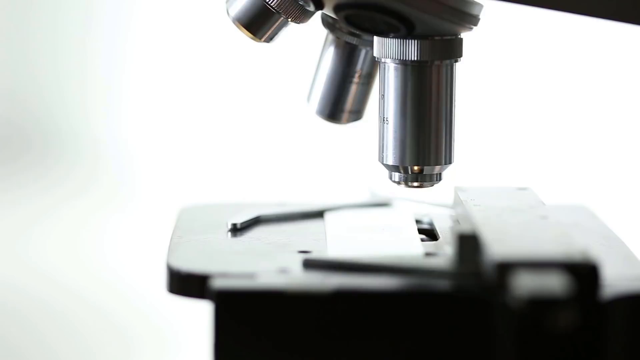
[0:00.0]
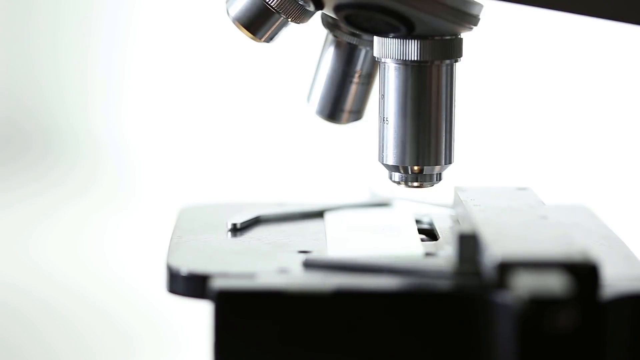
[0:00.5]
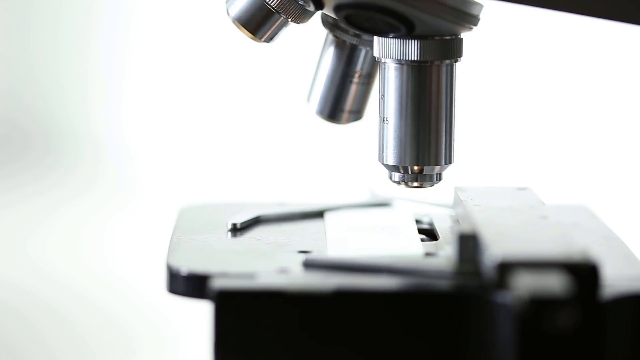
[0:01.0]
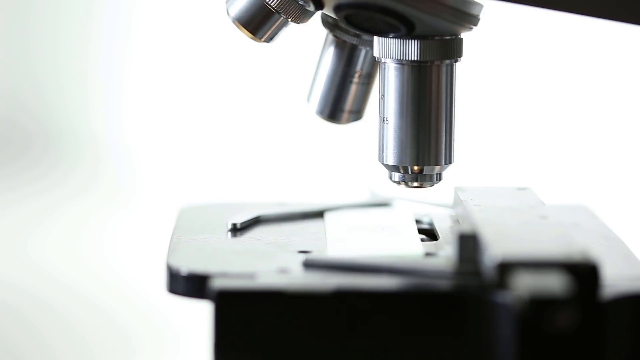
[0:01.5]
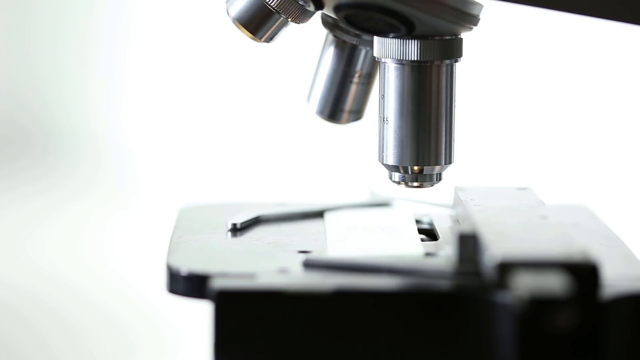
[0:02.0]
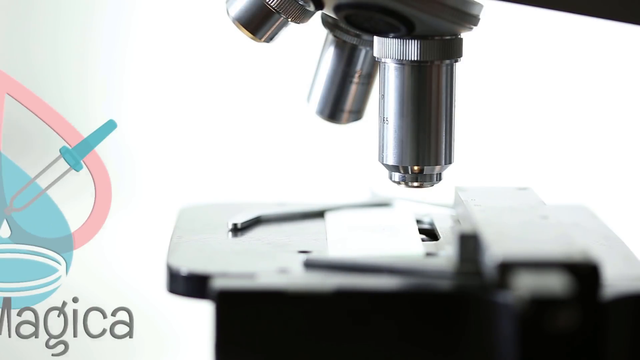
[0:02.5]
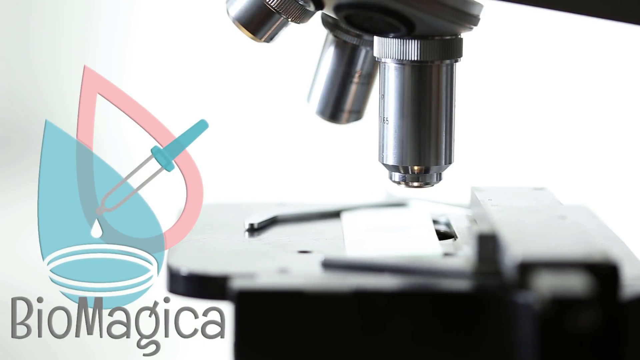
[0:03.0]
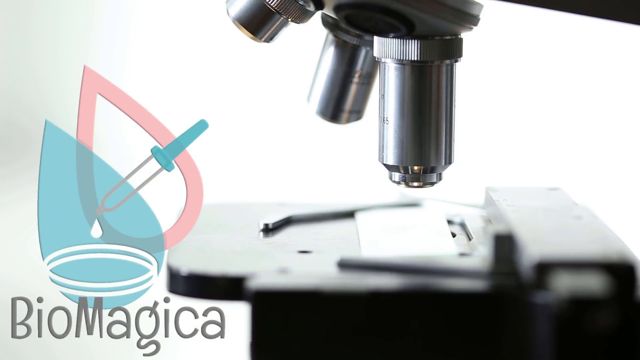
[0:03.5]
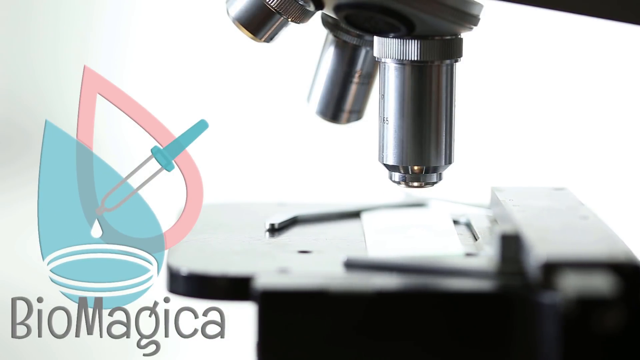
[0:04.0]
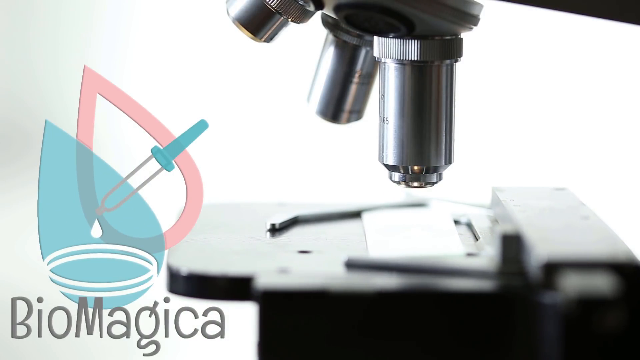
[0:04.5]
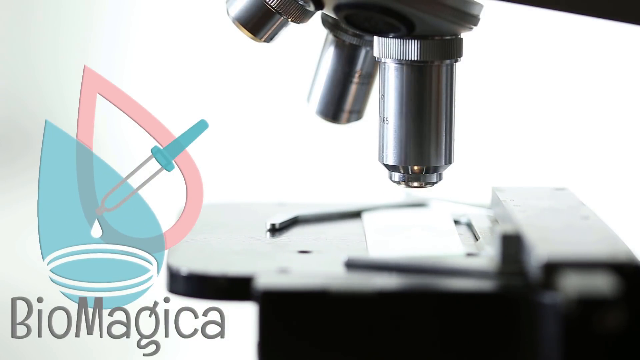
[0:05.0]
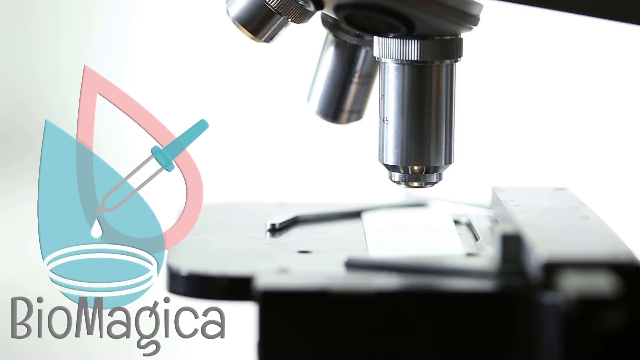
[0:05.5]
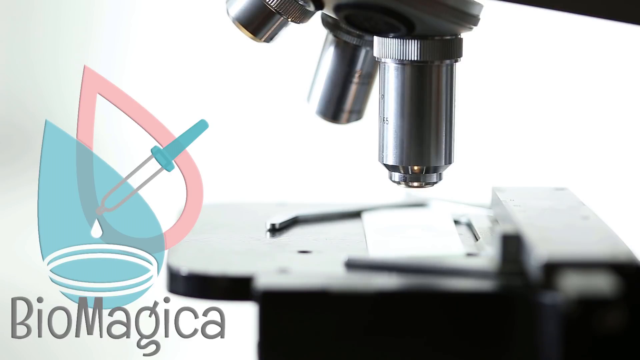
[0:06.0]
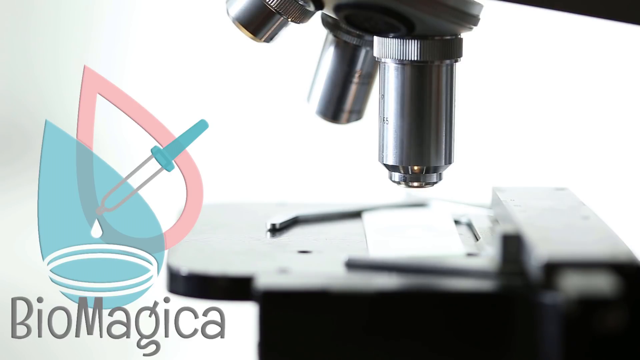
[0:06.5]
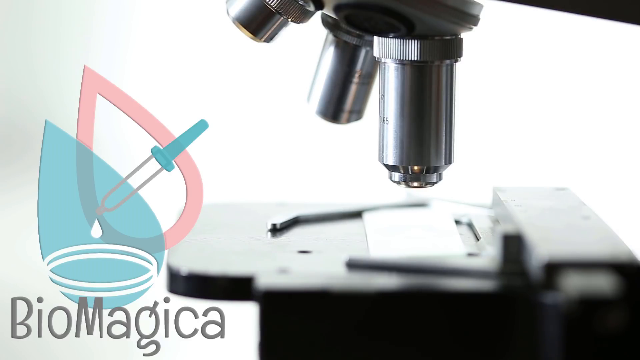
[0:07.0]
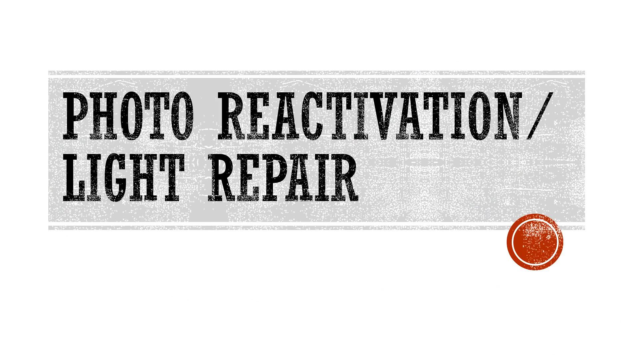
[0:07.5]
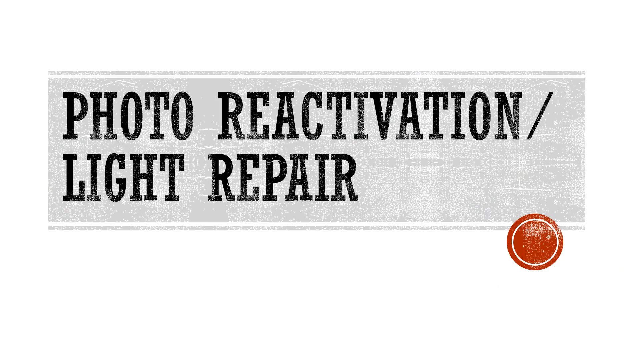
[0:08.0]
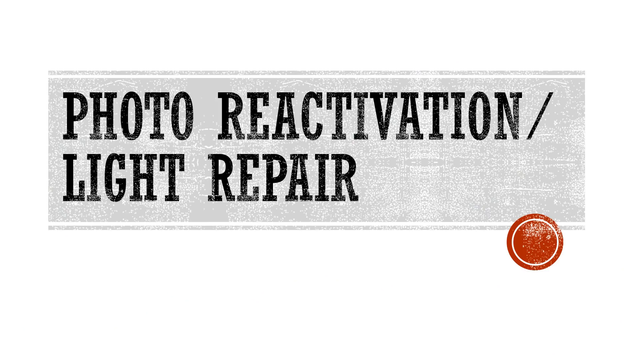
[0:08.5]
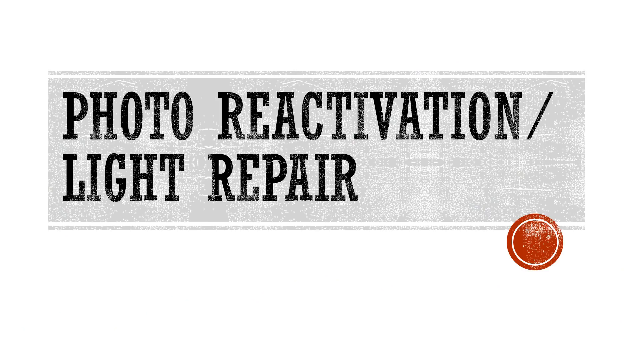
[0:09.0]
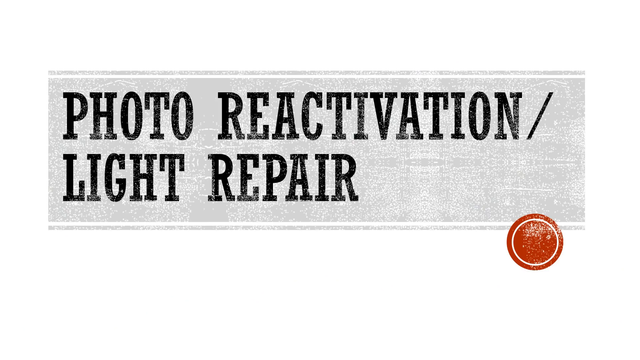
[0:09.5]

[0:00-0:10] An image about photoreactivation and light repair is shown. A microscope and a slide are present, with a clear contrast between them, and the area under the silver microscope is clearly visible.